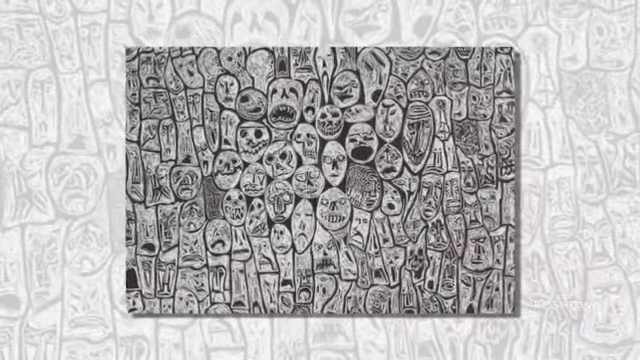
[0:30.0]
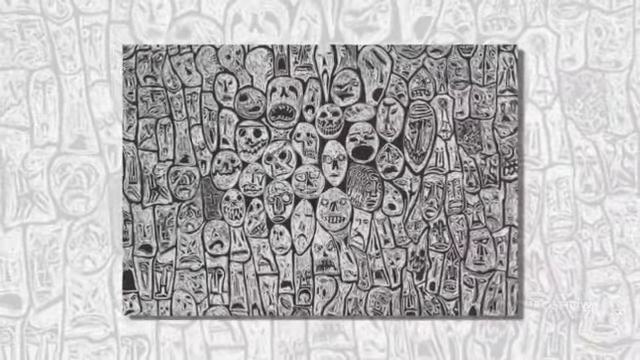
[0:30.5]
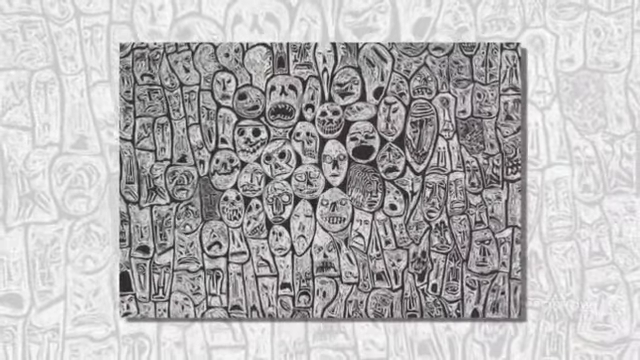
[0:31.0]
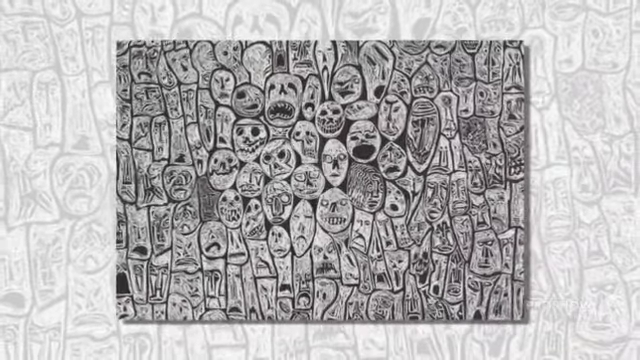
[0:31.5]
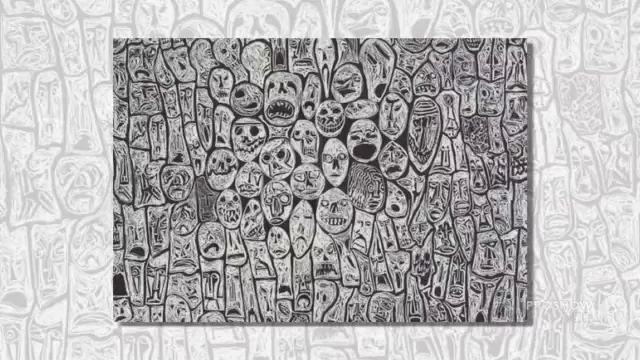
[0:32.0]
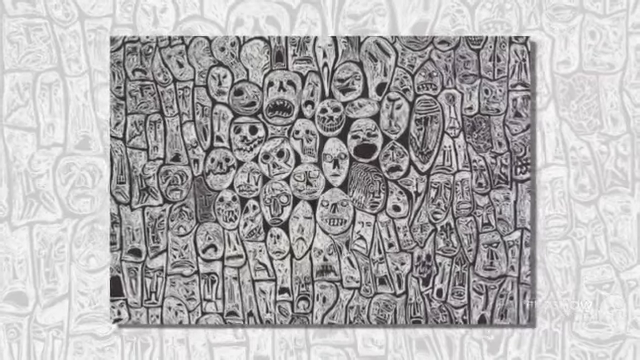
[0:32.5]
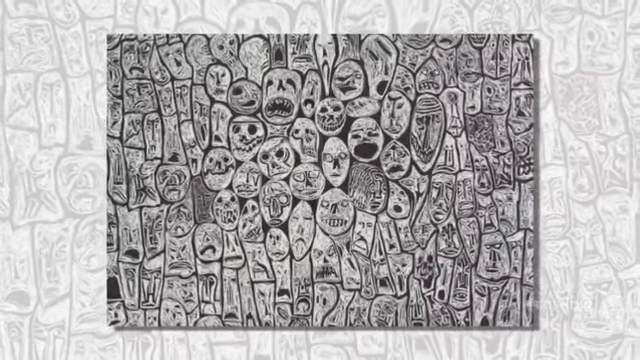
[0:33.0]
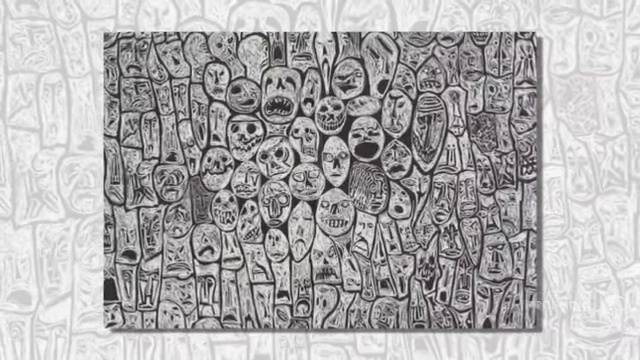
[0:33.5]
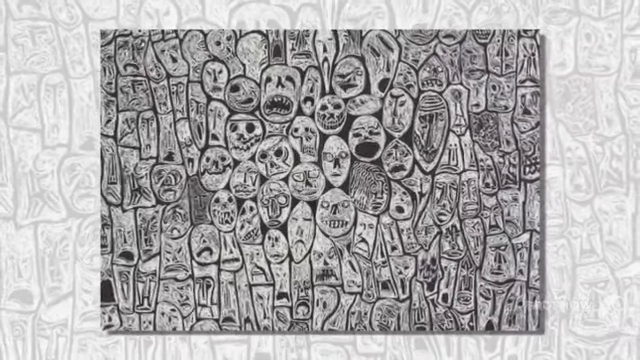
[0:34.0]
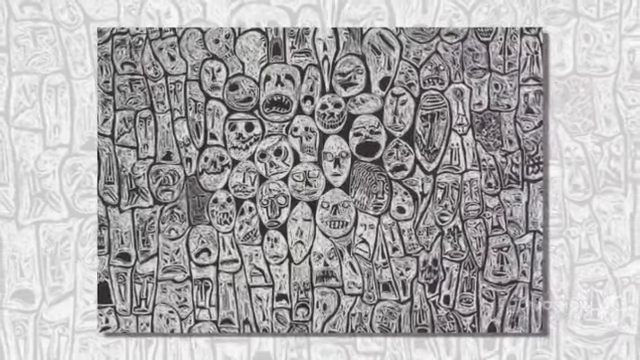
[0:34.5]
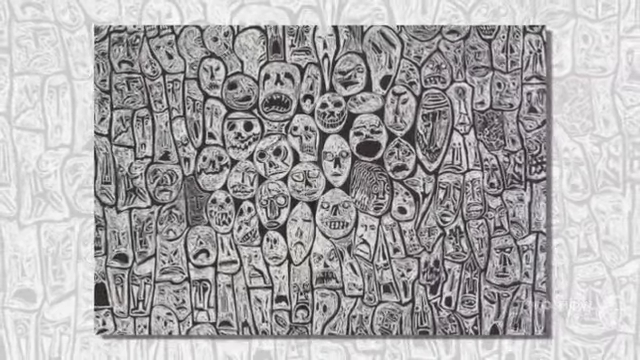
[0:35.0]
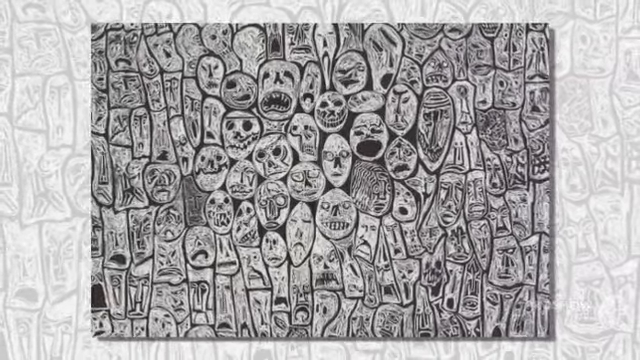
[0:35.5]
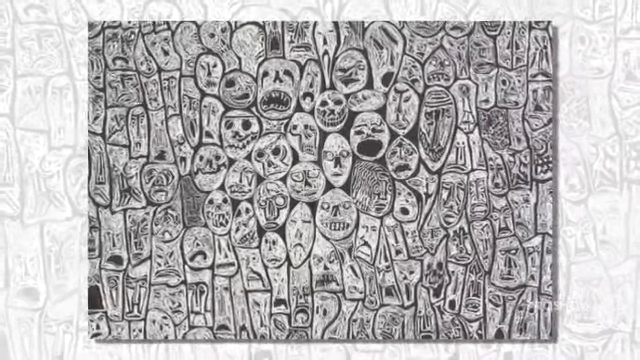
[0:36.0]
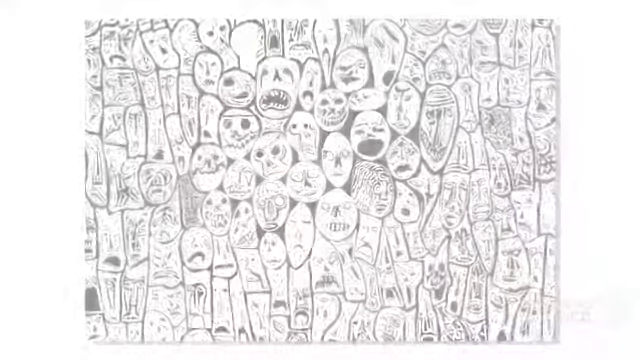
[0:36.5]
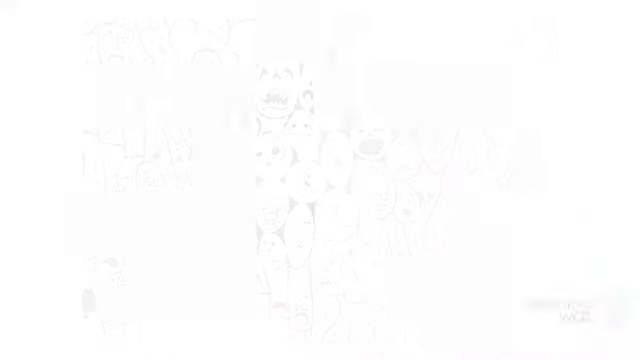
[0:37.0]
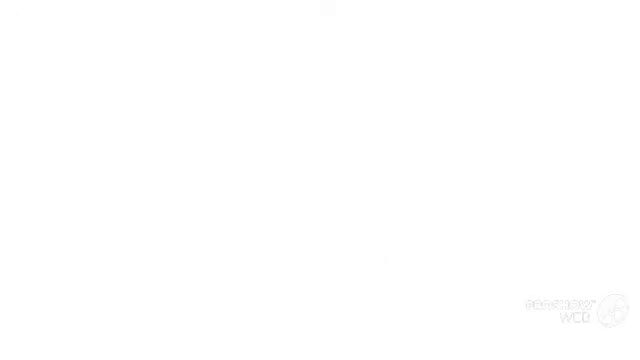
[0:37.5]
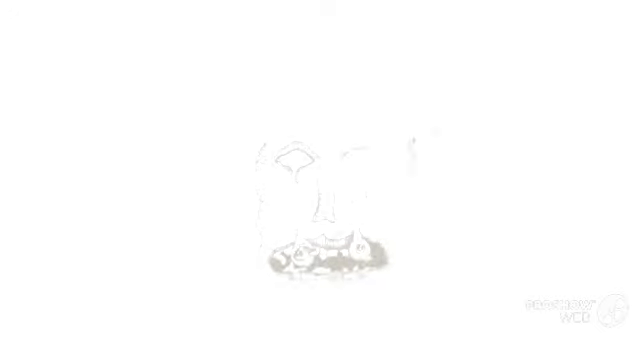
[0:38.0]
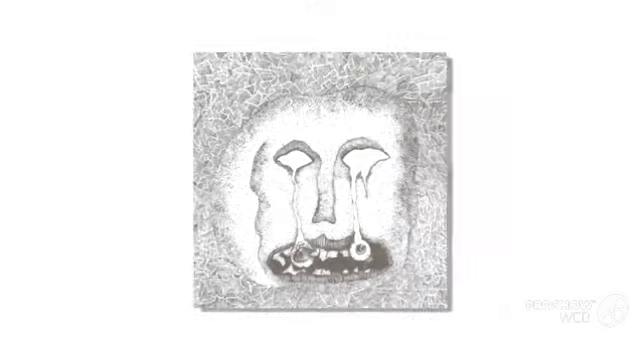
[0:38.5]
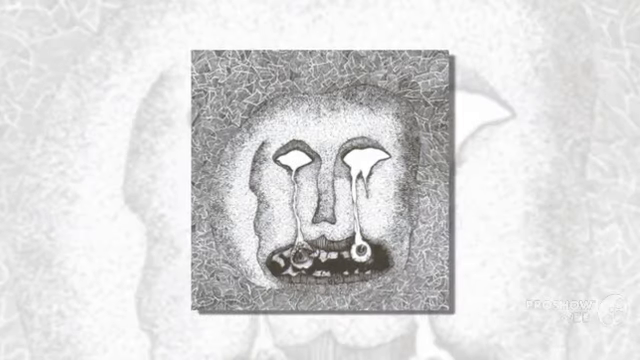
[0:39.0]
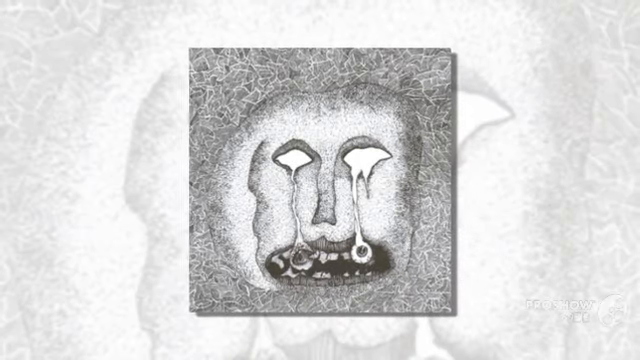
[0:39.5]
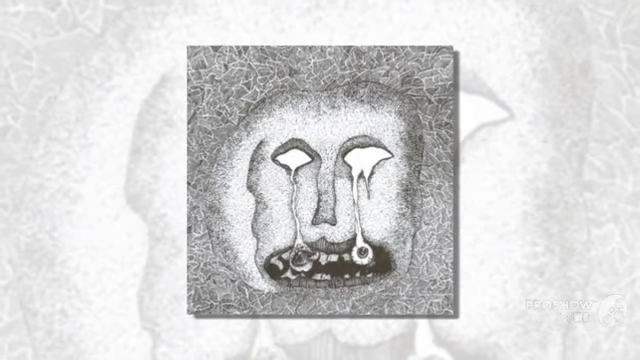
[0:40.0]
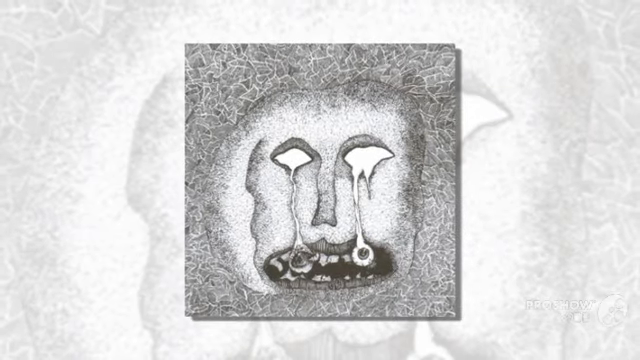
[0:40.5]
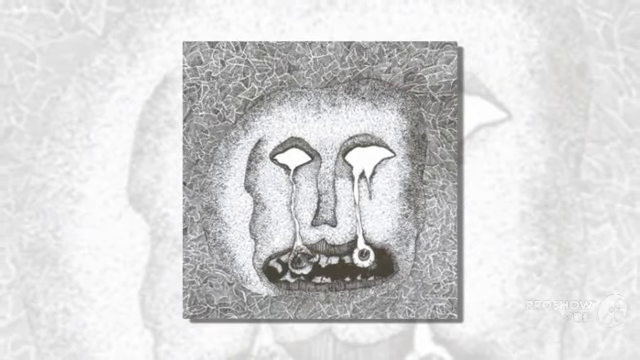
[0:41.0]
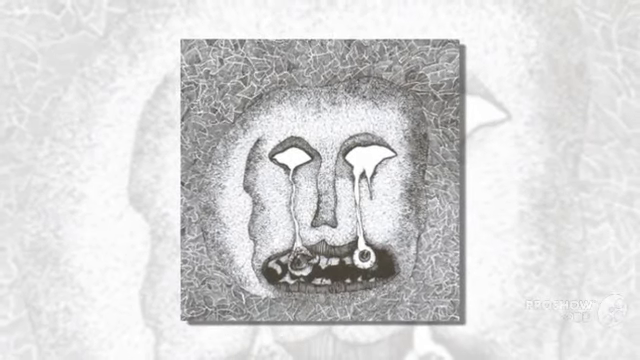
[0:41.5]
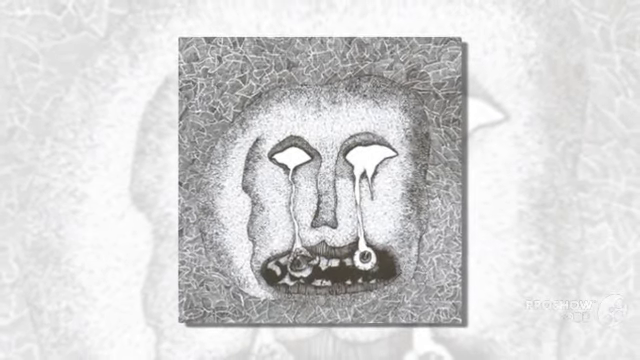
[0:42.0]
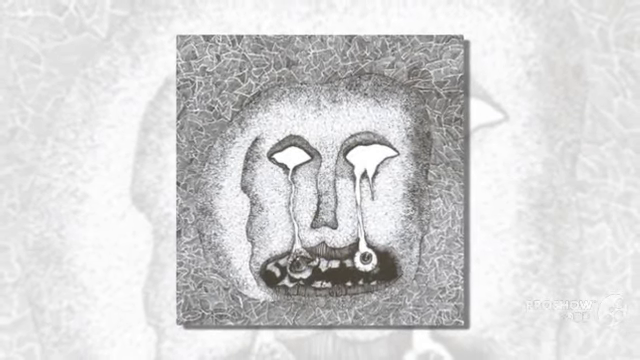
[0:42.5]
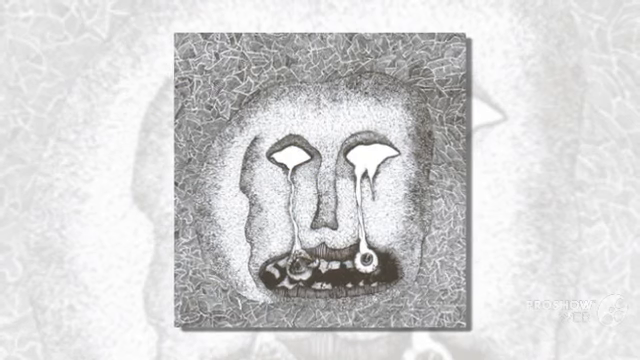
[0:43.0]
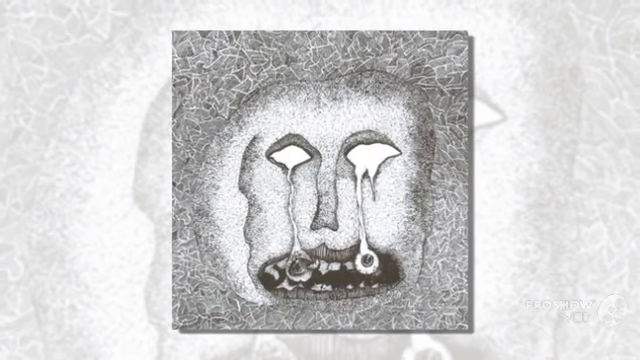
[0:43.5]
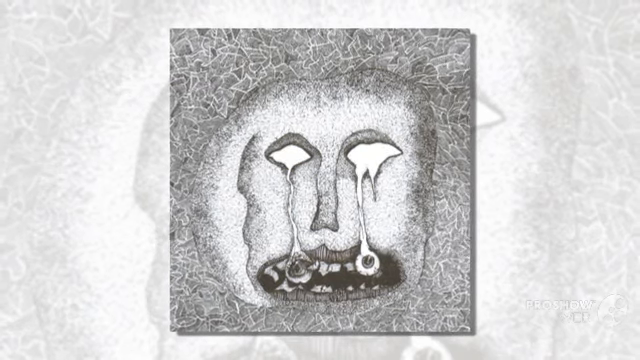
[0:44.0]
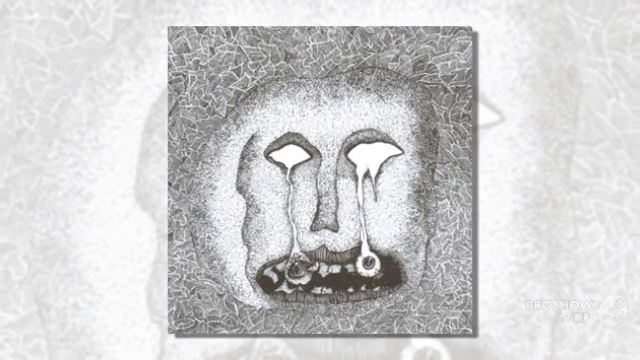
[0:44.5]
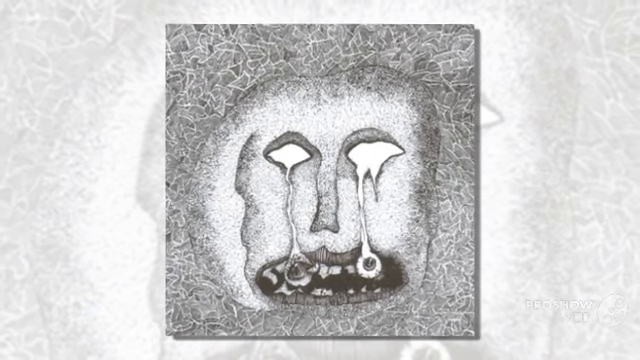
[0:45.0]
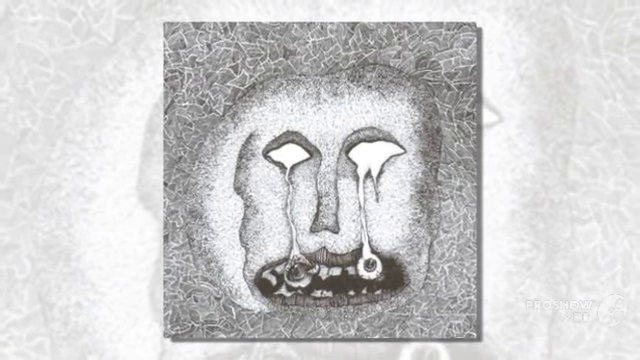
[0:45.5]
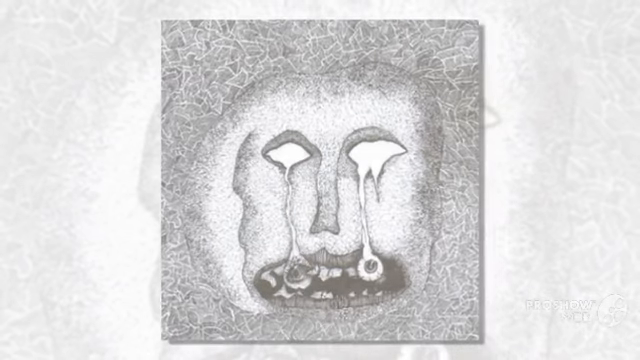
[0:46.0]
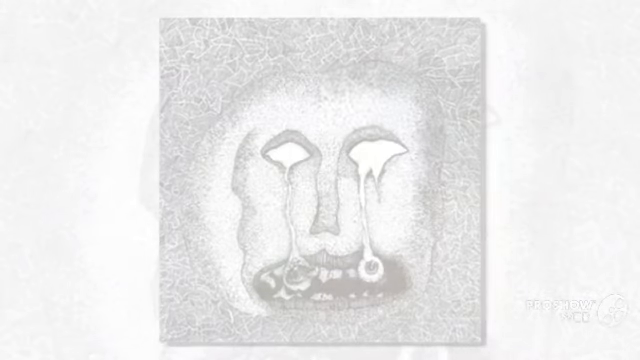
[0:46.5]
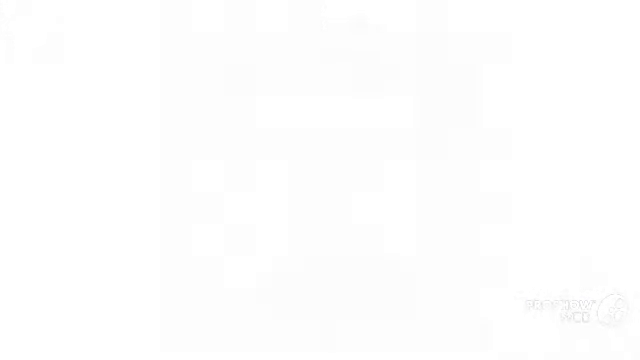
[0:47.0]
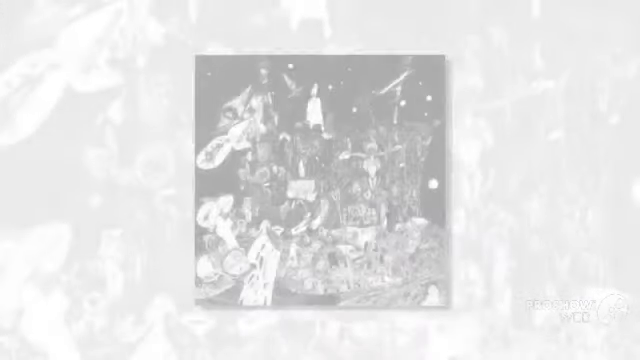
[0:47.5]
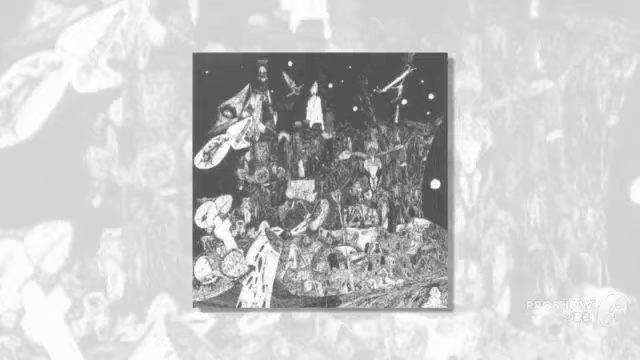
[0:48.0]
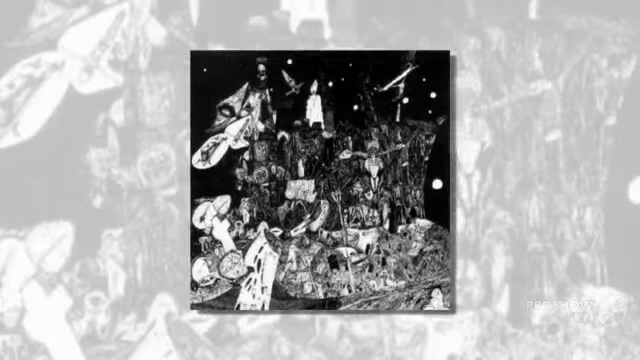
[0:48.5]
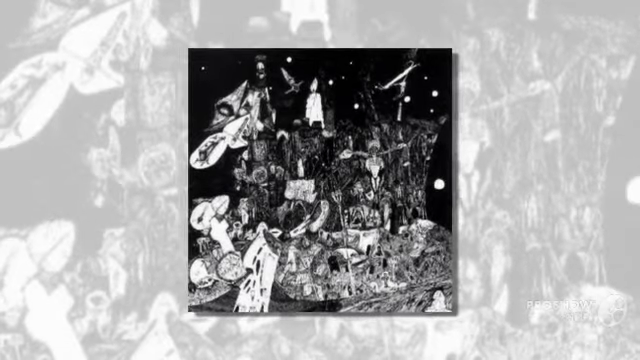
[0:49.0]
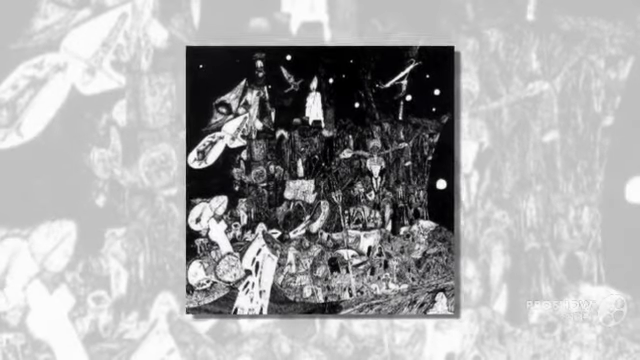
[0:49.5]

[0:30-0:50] The bunch of faces seems to be mostly facing towards the viewer. There is a mix of circular faces with skull-like features and sharp teeth, some with open mouths, some smirking and some screaming, and rectangular faces that sort of do the same thing but, because of their rectangular shape, look more scrunched up and compressed. The view zooms in, and then another picture appears: a single roundish face facing the viewer. Its eyes are white, and its eyeballs are coming out of it, forming something like a tear trail towards its mouth. The mouth is open and looks sort of broken, with teeth everywhere, and there are fuzzy lines all around the face.